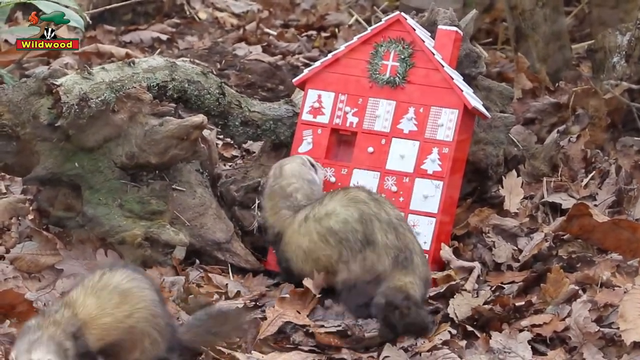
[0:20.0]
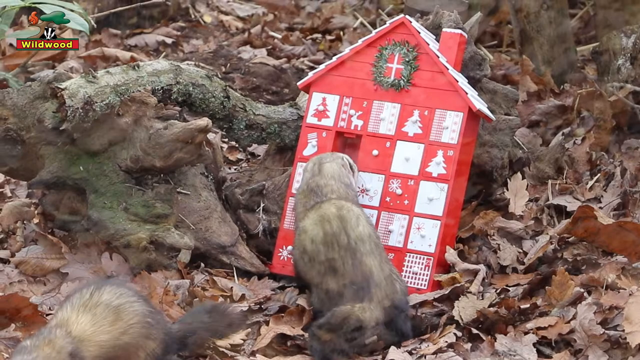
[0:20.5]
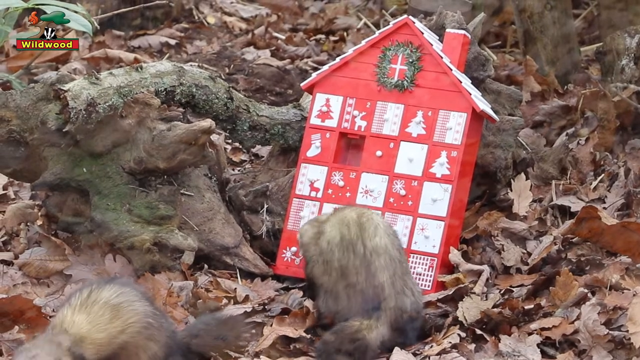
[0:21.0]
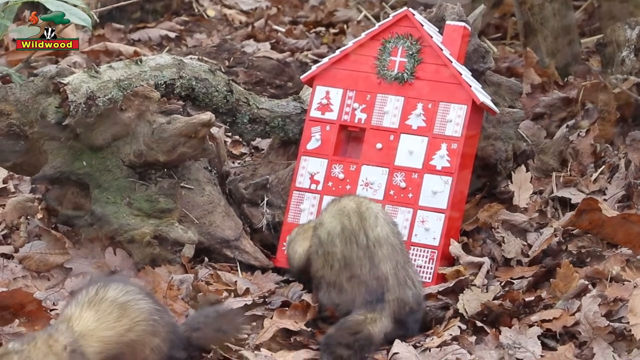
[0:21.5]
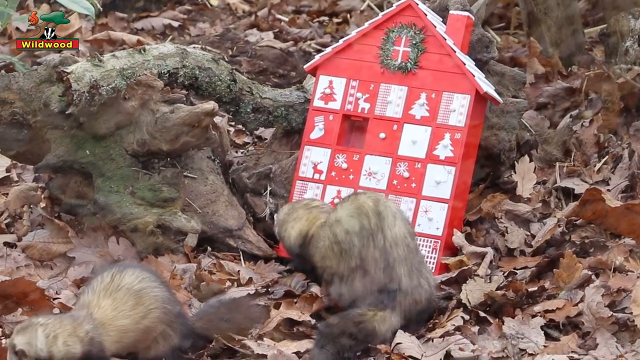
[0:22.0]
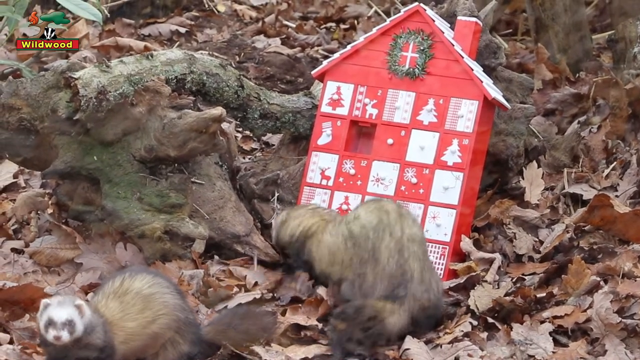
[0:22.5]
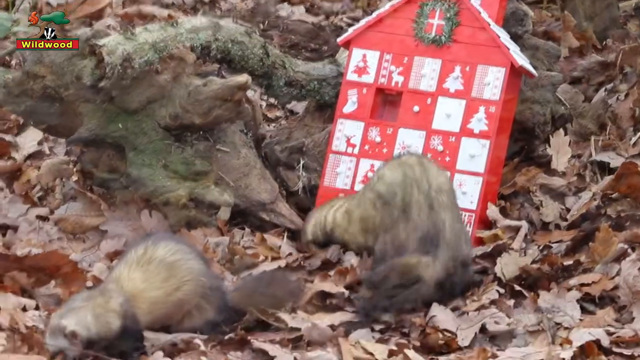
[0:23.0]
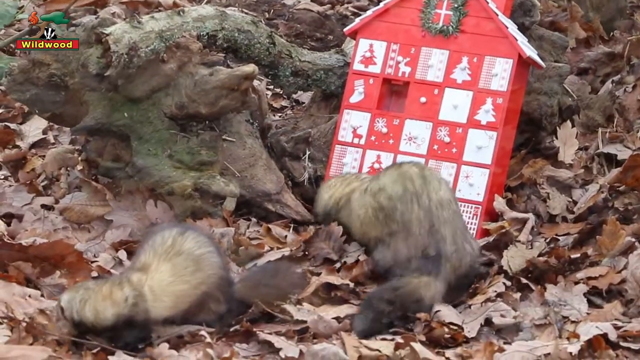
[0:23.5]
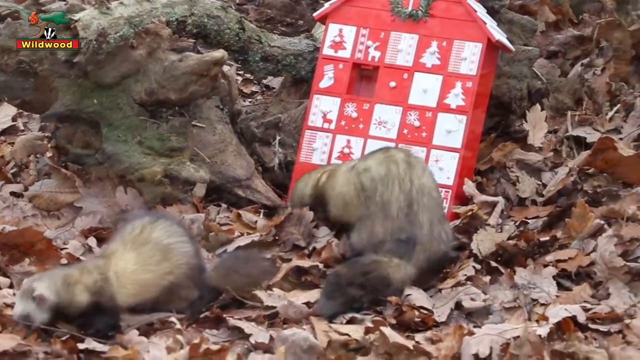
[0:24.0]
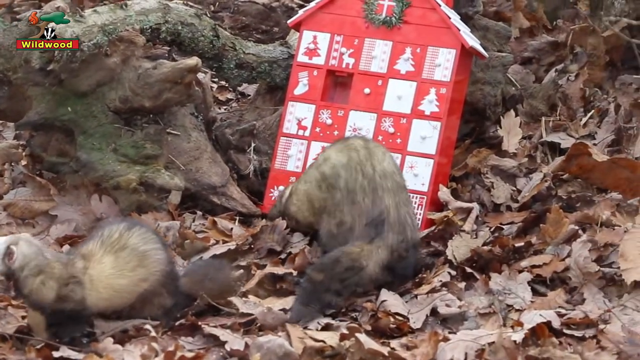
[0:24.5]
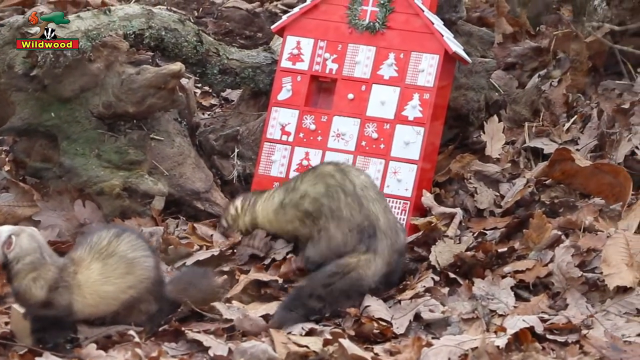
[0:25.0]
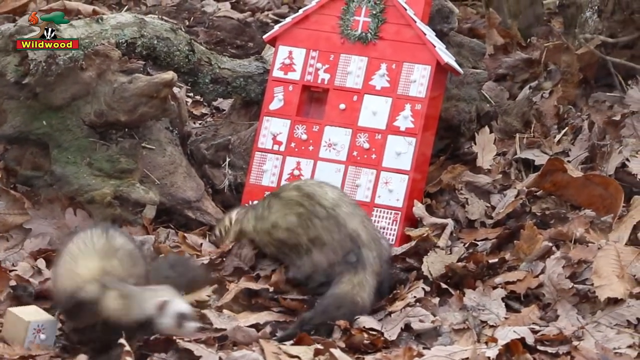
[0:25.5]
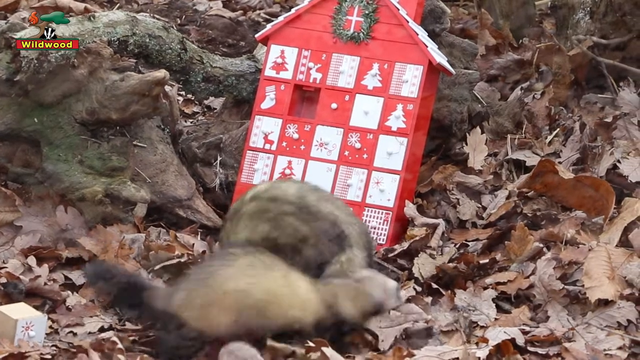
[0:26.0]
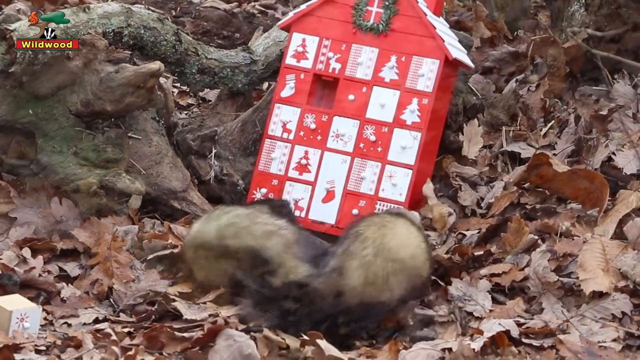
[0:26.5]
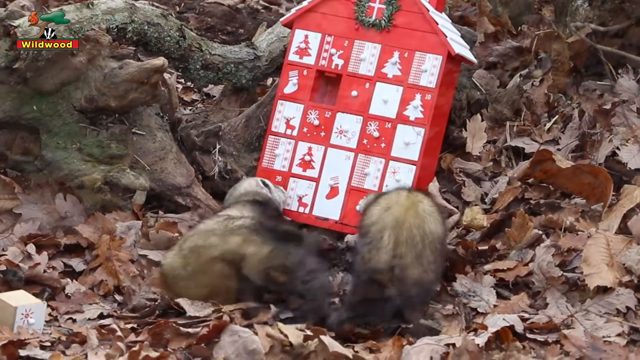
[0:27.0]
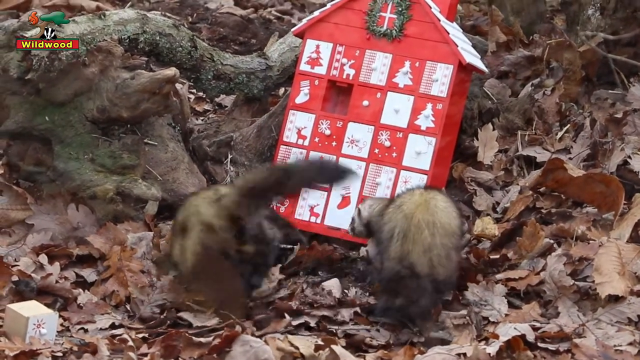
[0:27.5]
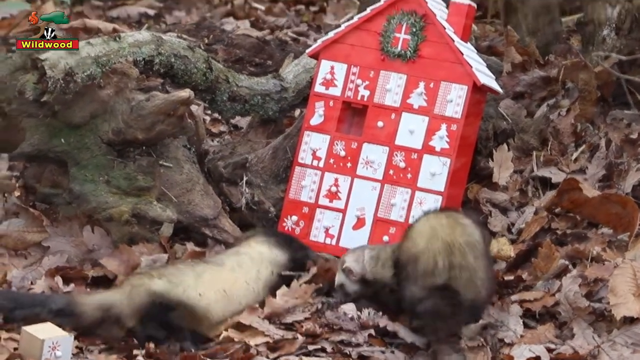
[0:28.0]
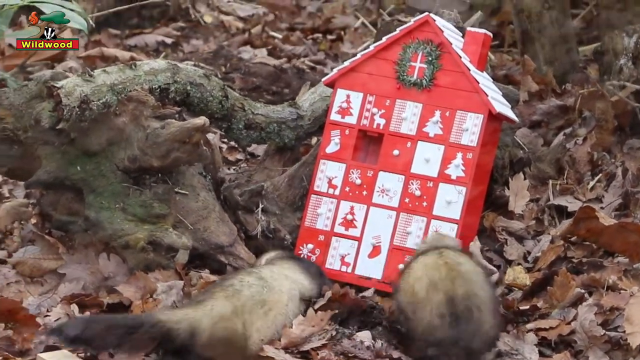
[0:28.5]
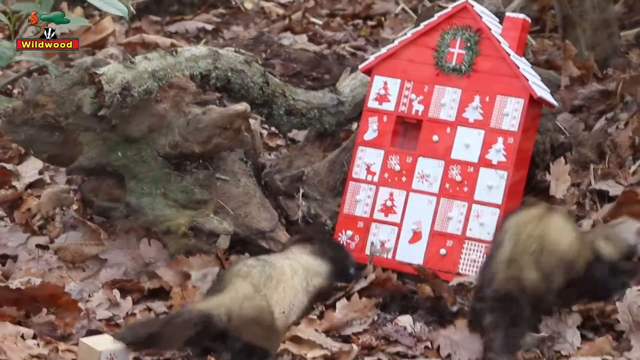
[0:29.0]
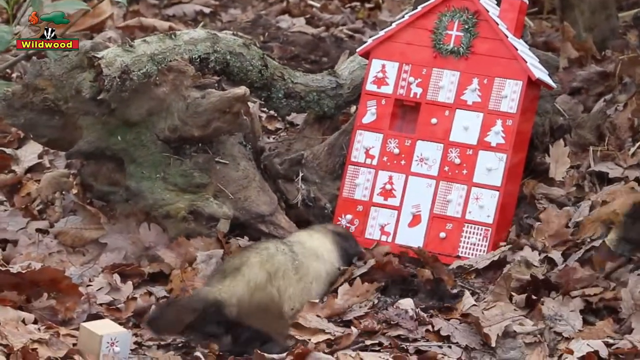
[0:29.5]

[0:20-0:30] The ferrets continue playing with the little red plastic house with advent calendar windows. In the corner there is a caption with a logo of a badger that reads "Wildwood", suggesting they could be wild ferrets, possibly polecats or a similar species. One ferret digs around underneath the house while the other runs around behind him excitedly and then runs off to the right of the frame. A compartment is possibly visible behind one of the little plastic windows, and perhaps there were treats in there for the ferrets to get at.